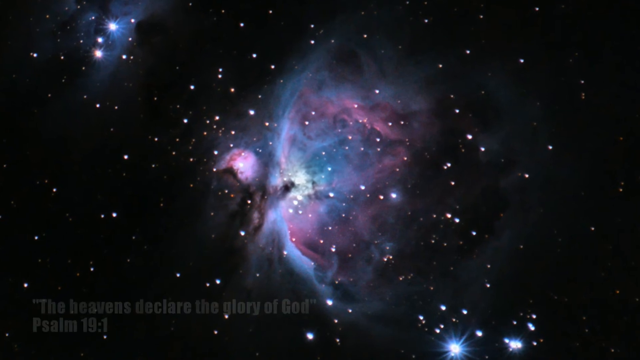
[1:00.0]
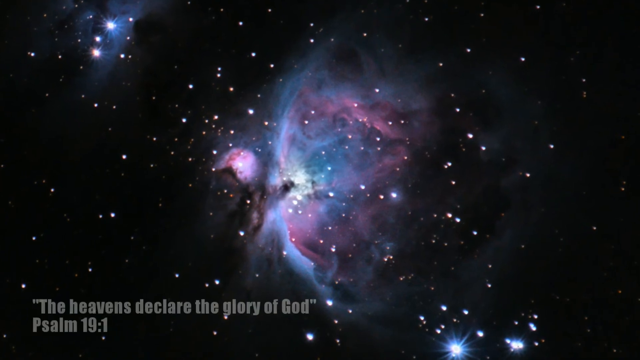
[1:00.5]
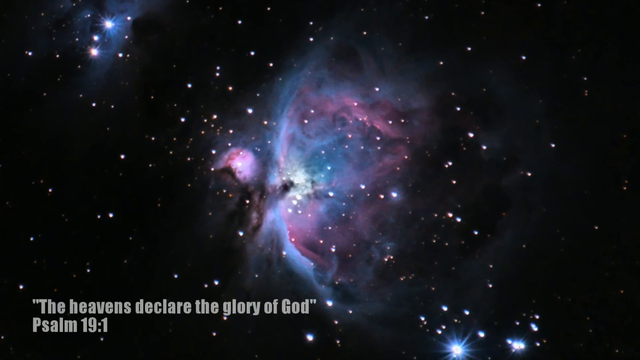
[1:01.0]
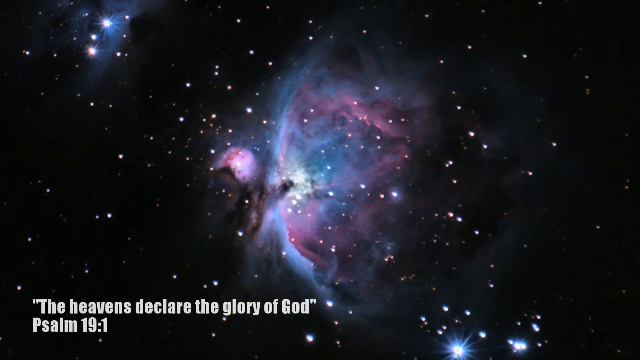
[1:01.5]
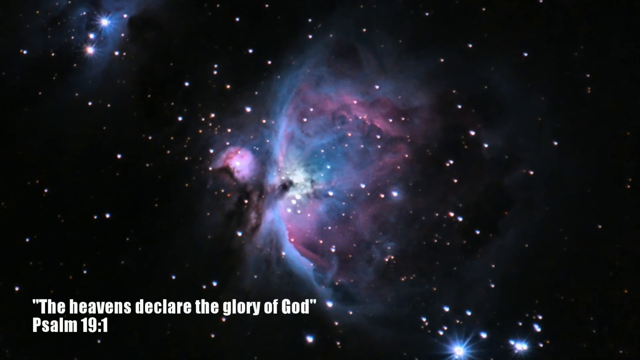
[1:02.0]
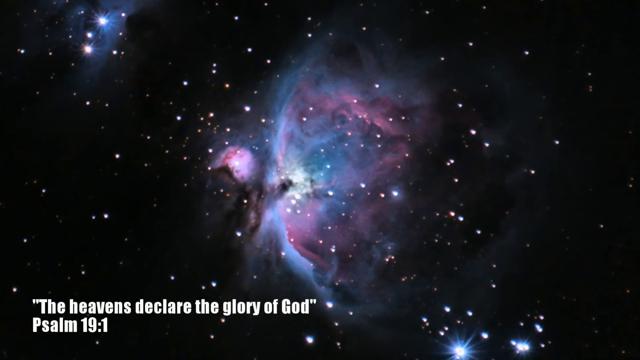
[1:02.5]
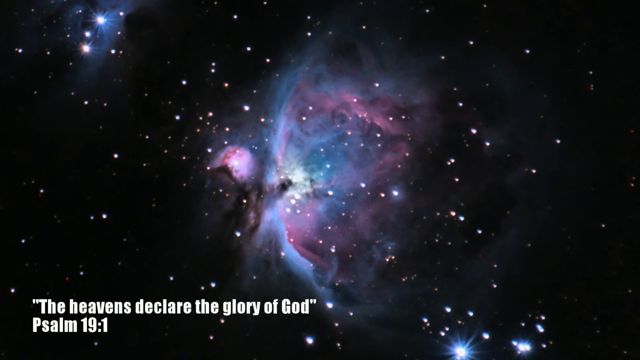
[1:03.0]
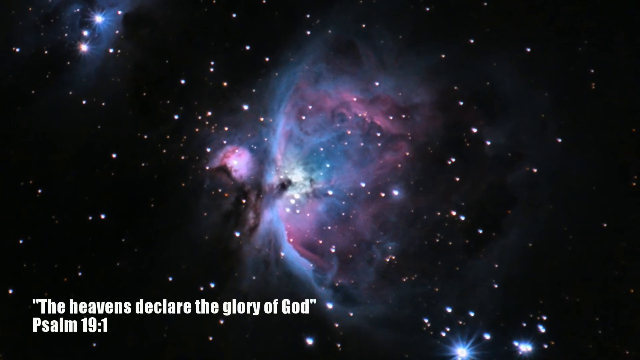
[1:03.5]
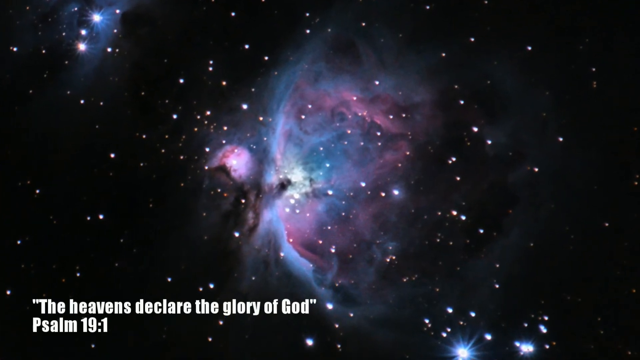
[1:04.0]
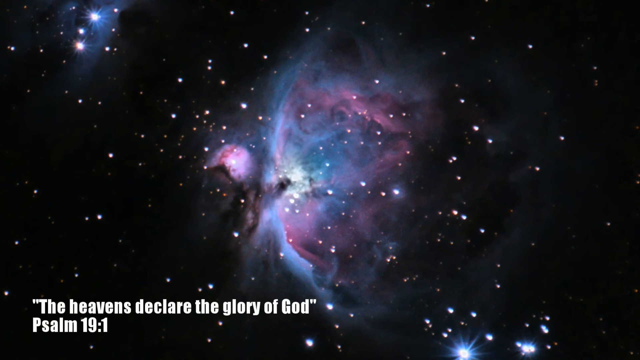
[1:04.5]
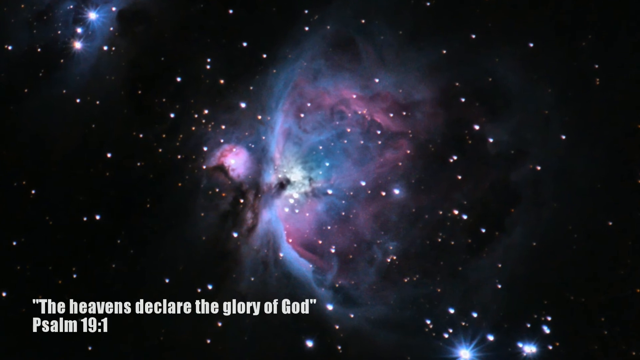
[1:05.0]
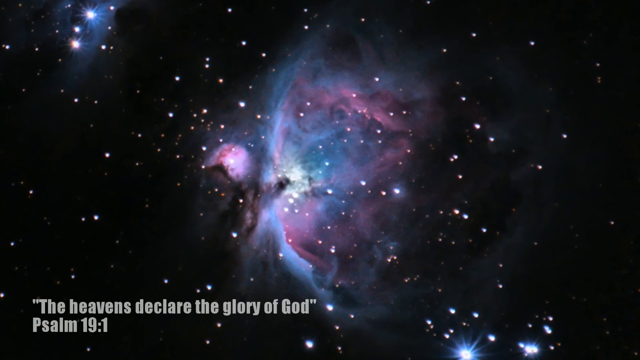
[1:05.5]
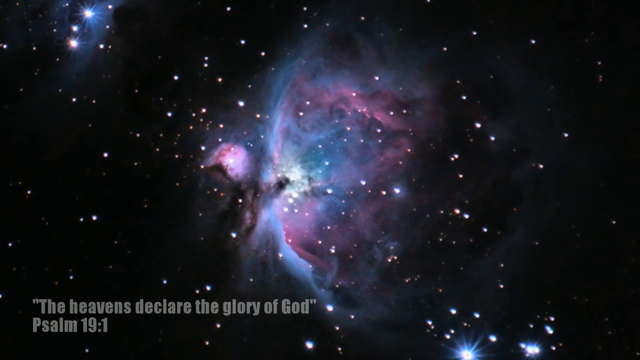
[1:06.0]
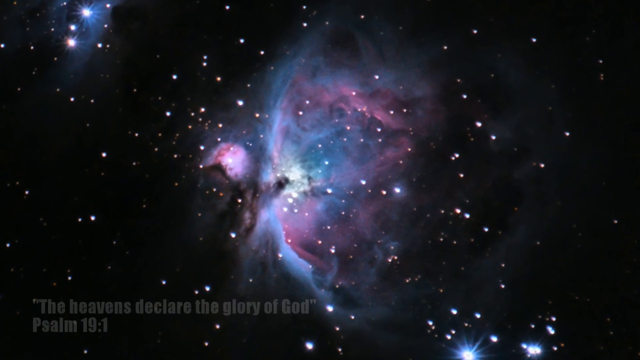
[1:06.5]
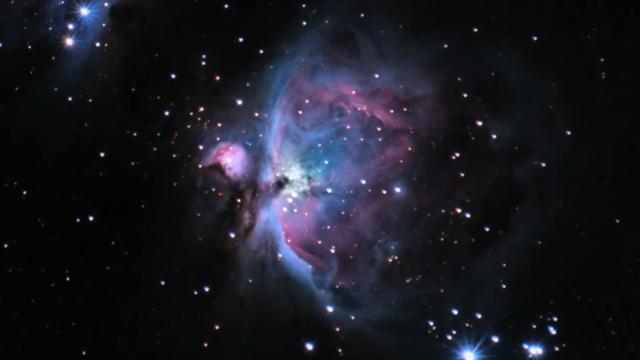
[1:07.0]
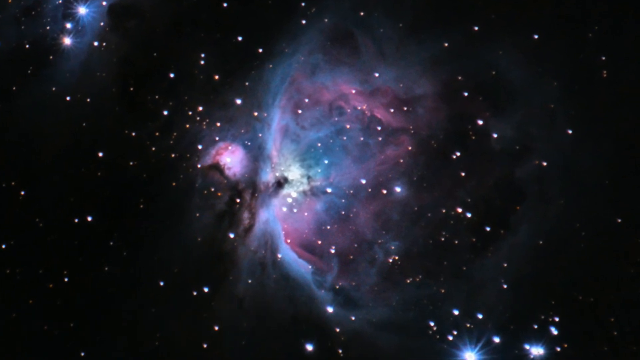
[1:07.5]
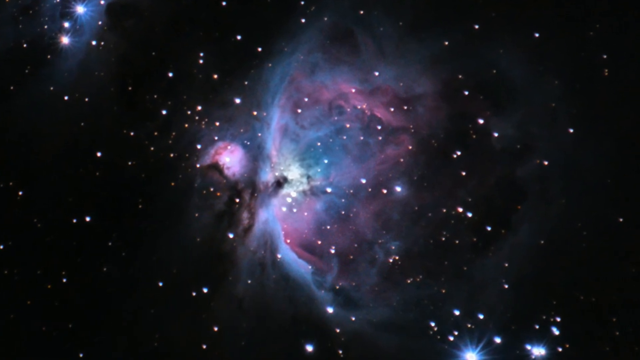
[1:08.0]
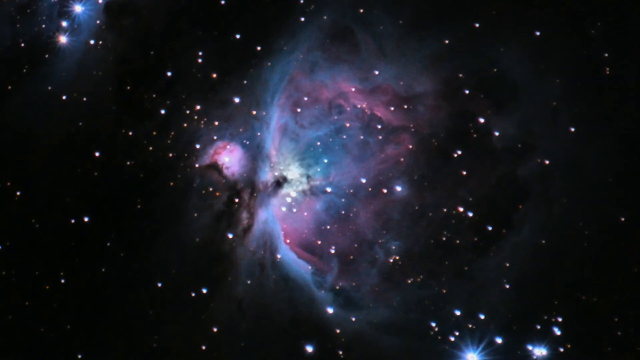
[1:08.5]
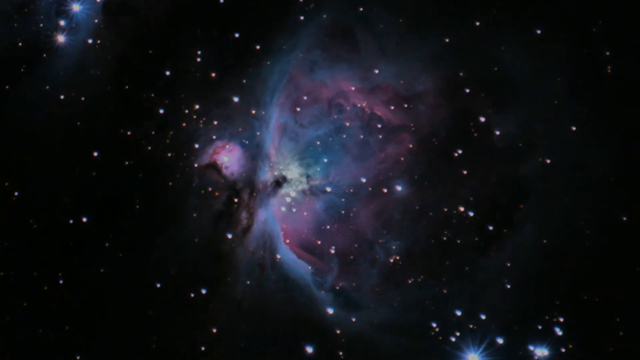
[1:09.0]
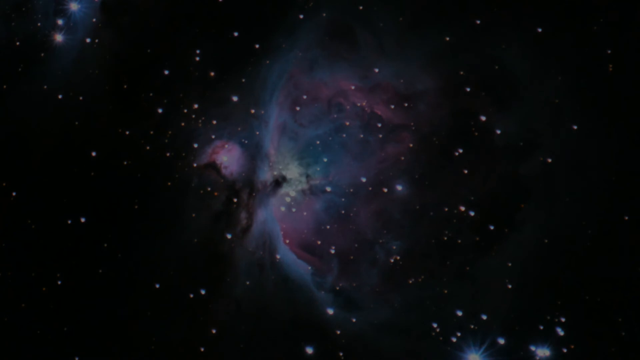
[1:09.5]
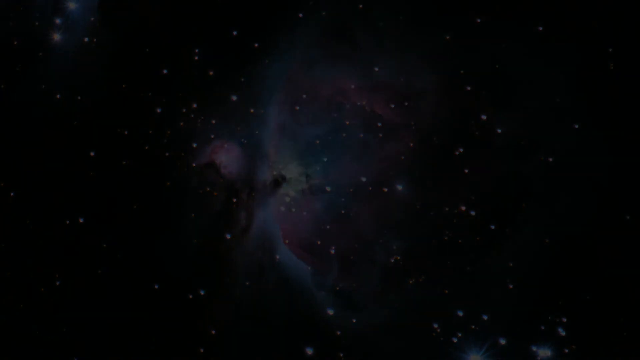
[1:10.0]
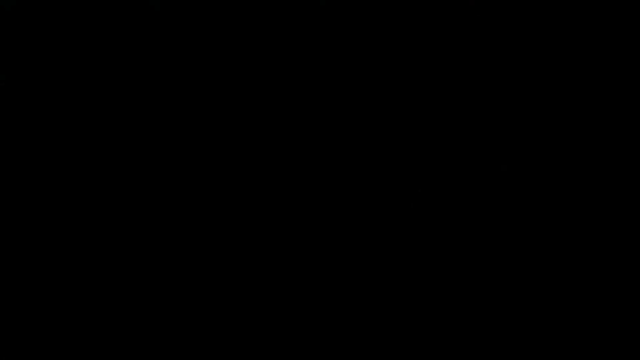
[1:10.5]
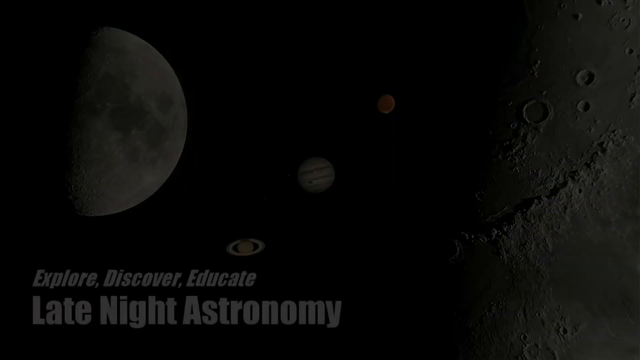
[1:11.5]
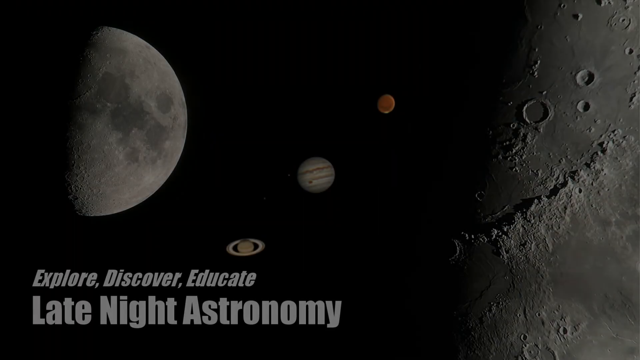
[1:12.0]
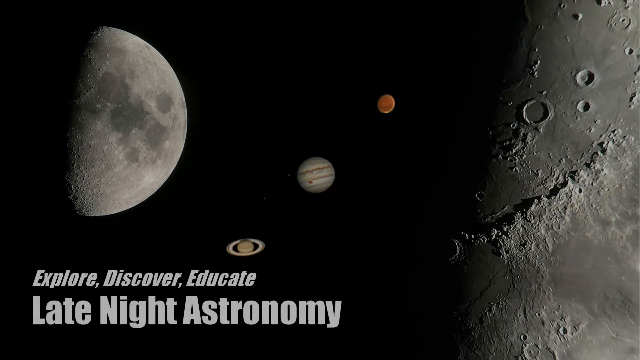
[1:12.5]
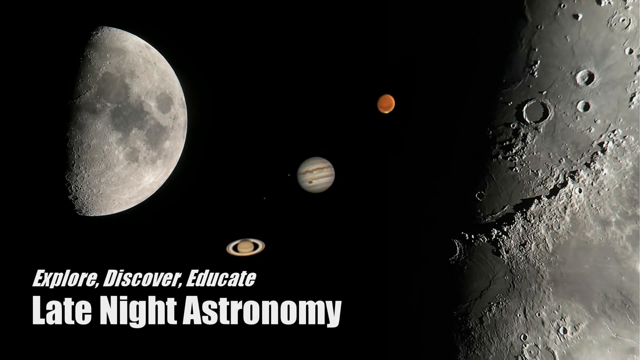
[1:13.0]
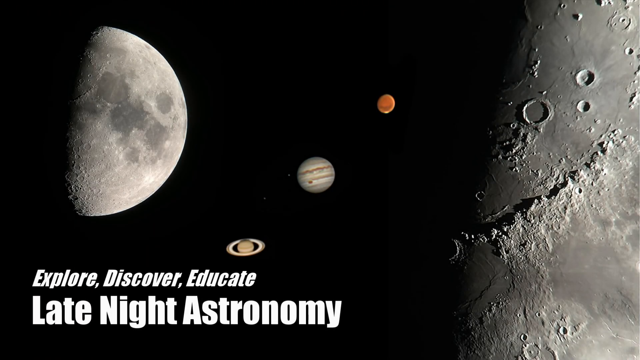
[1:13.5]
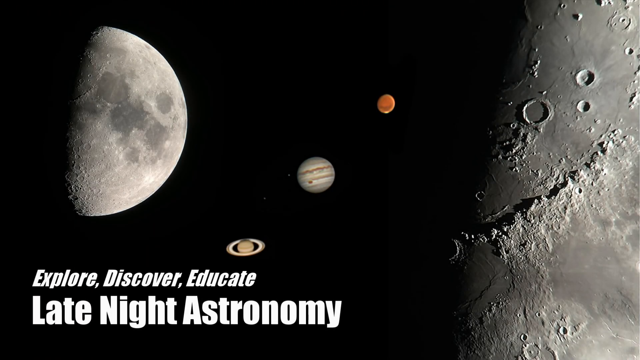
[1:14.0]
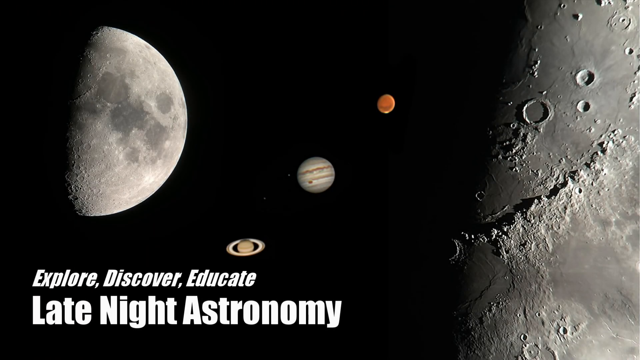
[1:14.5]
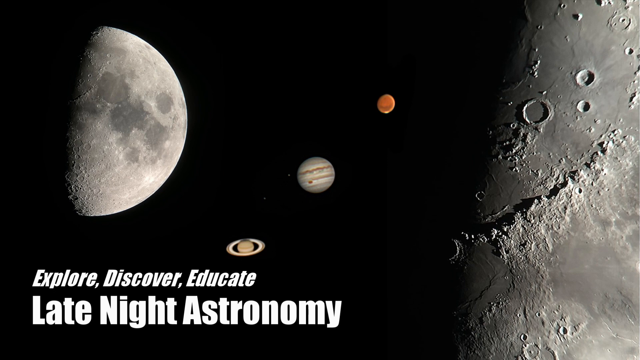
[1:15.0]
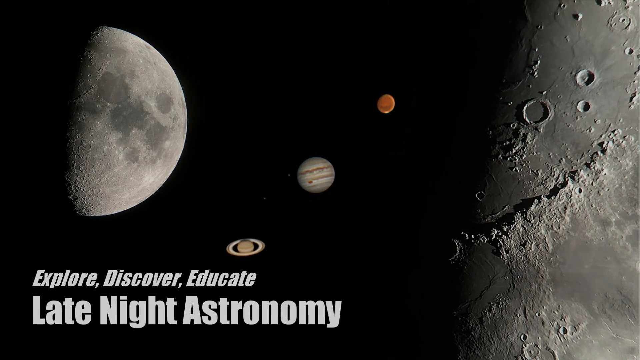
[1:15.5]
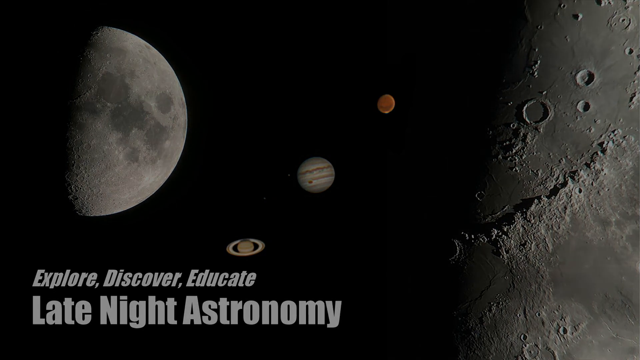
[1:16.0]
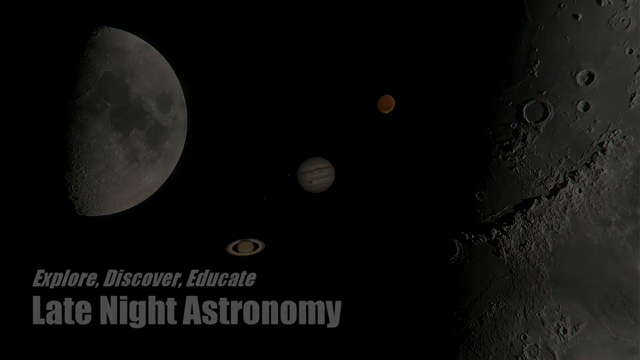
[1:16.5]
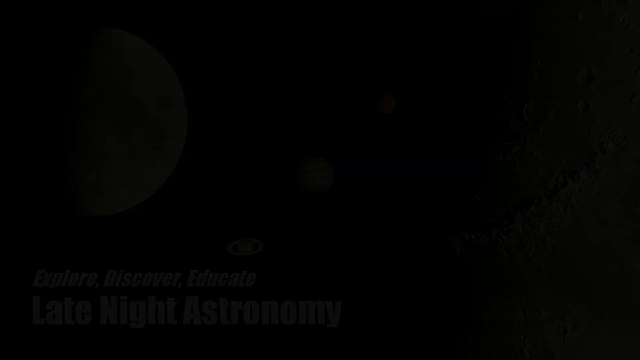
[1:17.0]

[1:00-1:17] The camera has zoomed in to the nebula so that it fills most of the middle of the screen. It is a bluish pinkish purple color, with a small spin-off to the left that is bright pink. Text appears at the bottom that looks like a Bible verse: "the heavens declare the glory of God. Psalm 19 one". As the text is overlaid, the image of the nebula slowly zooms in and gets bigger in the background, a very subtle zoom. The screen then fades to black, and a screen reads "Explore, Discover, Educate" and "Late Night Astronomy". Photographs follow of the Moon, Jupiter, Saturn, Mars, and a close-up of the craters on the Moon.